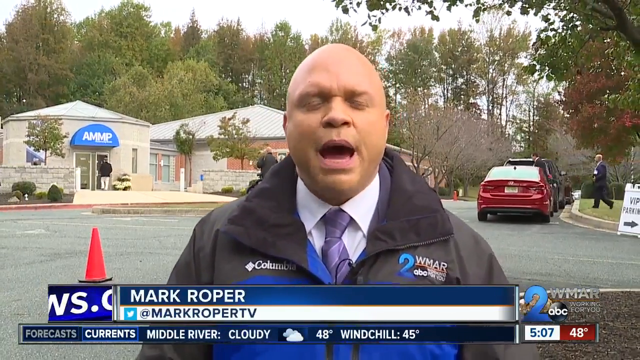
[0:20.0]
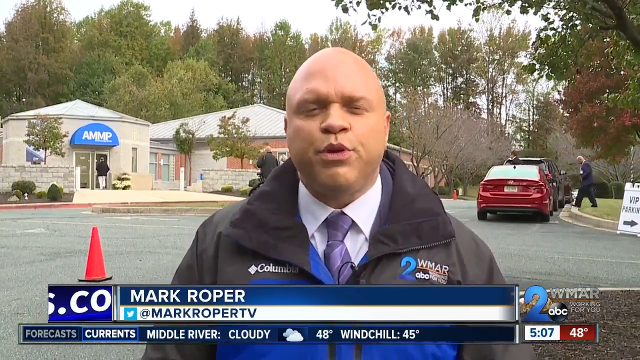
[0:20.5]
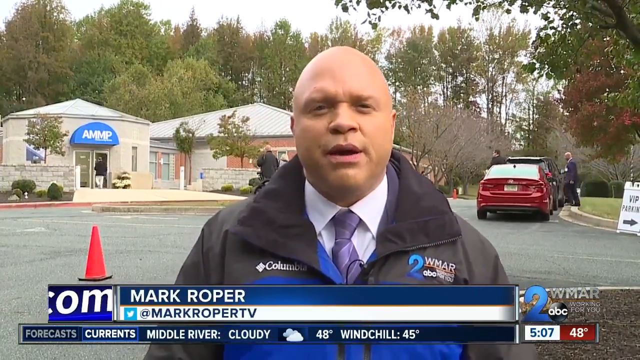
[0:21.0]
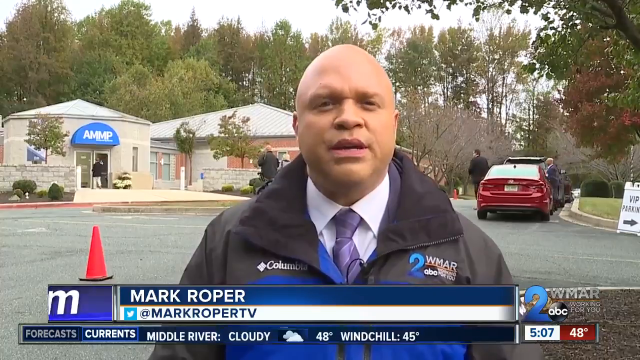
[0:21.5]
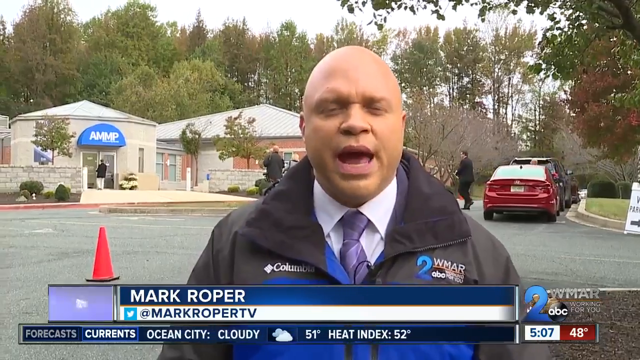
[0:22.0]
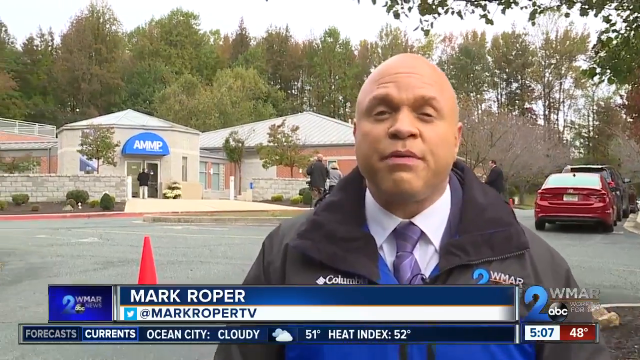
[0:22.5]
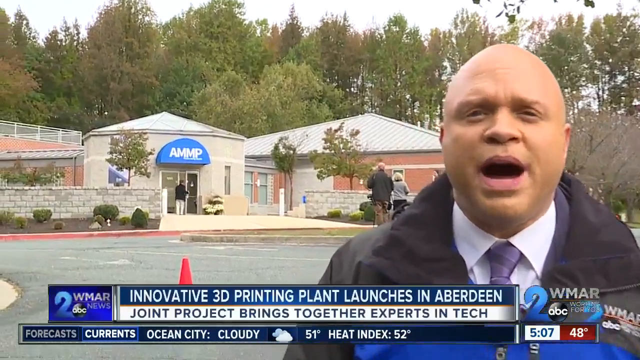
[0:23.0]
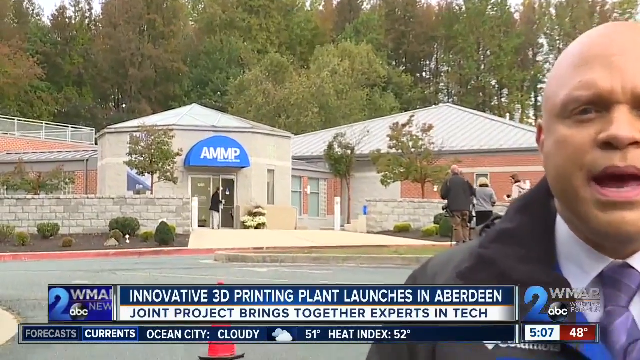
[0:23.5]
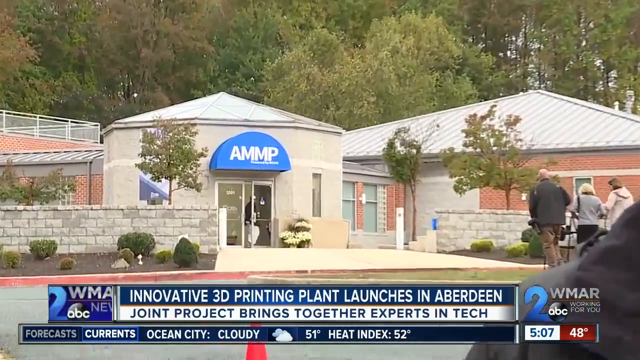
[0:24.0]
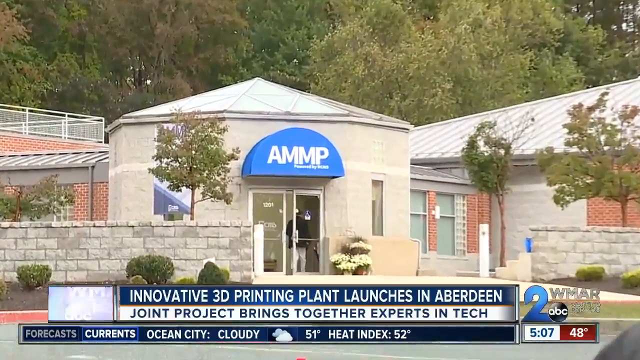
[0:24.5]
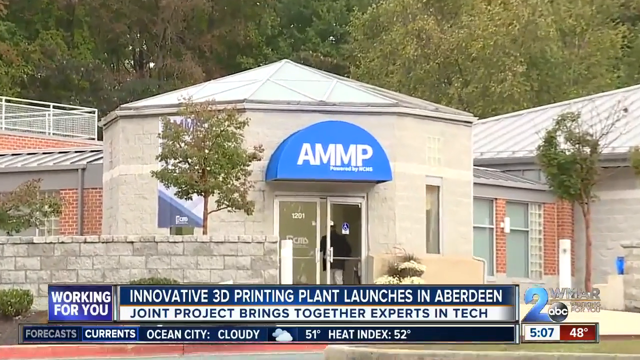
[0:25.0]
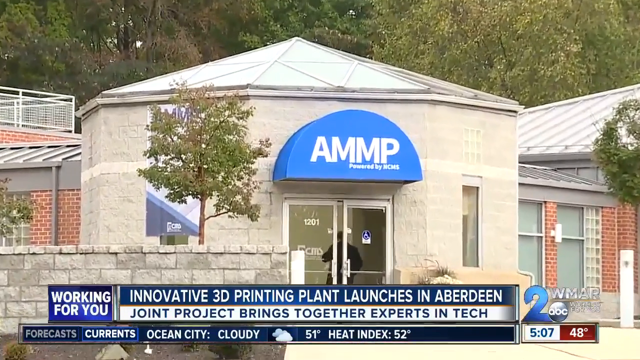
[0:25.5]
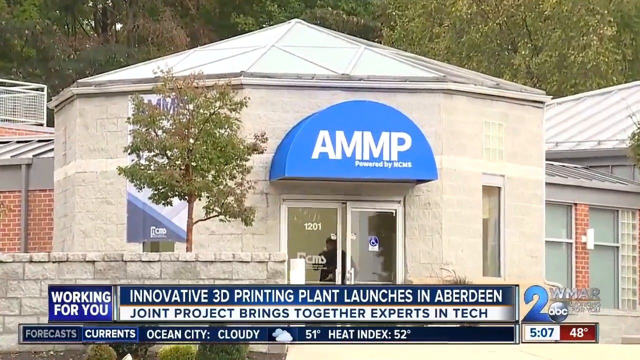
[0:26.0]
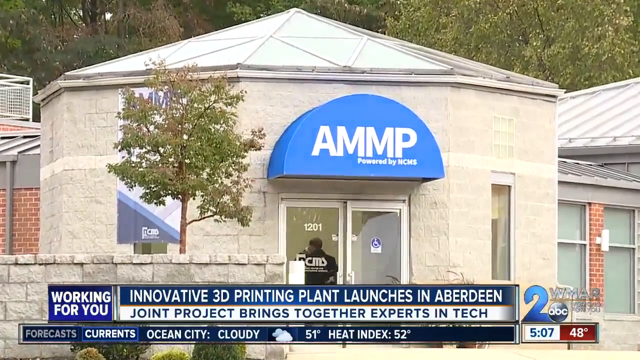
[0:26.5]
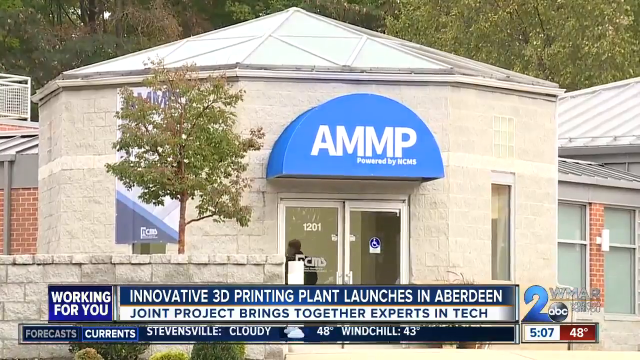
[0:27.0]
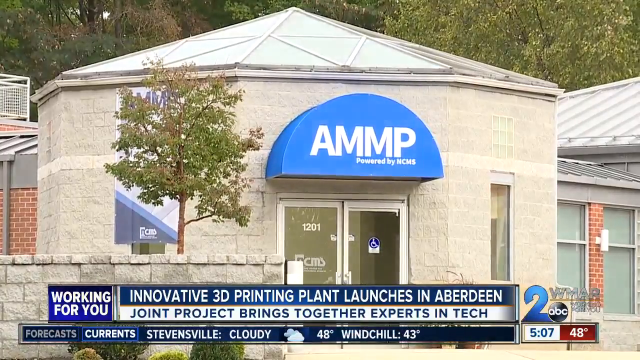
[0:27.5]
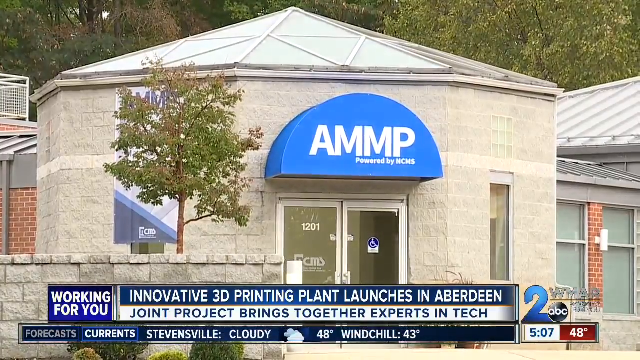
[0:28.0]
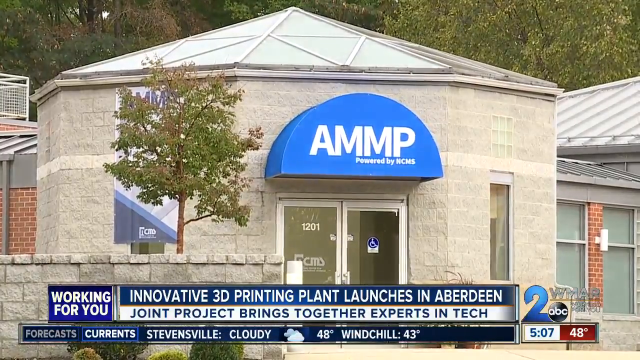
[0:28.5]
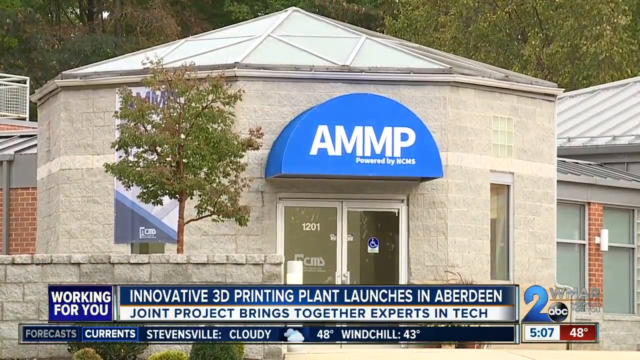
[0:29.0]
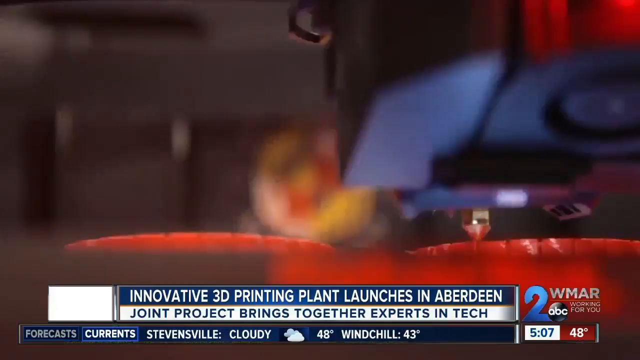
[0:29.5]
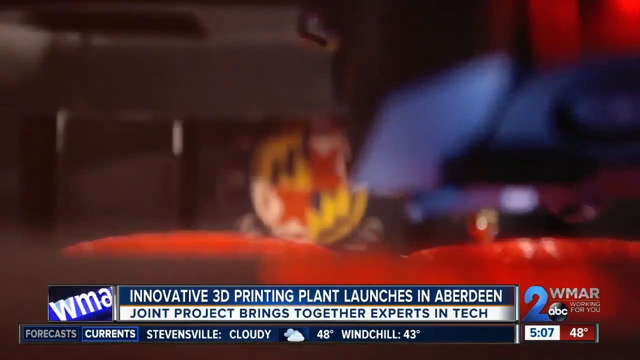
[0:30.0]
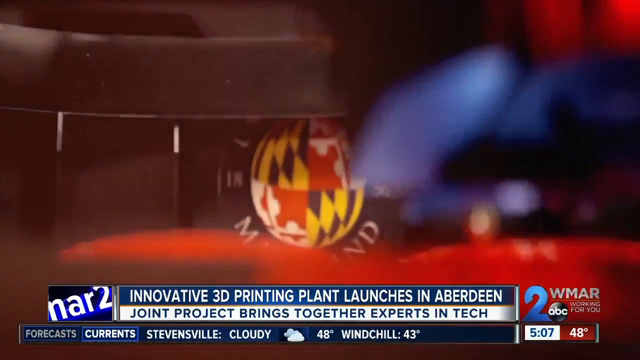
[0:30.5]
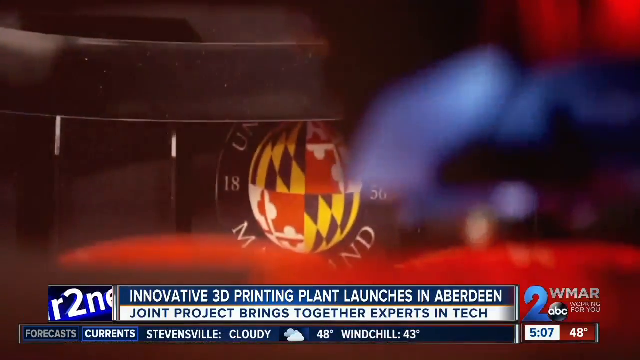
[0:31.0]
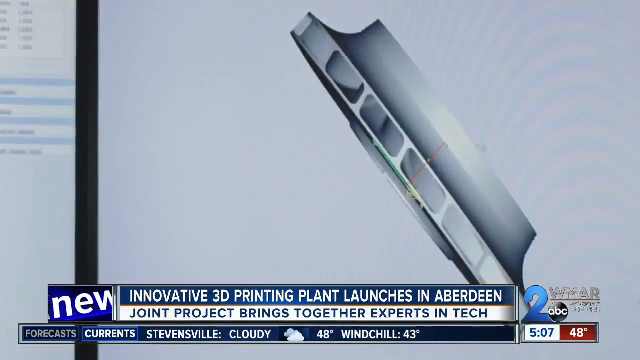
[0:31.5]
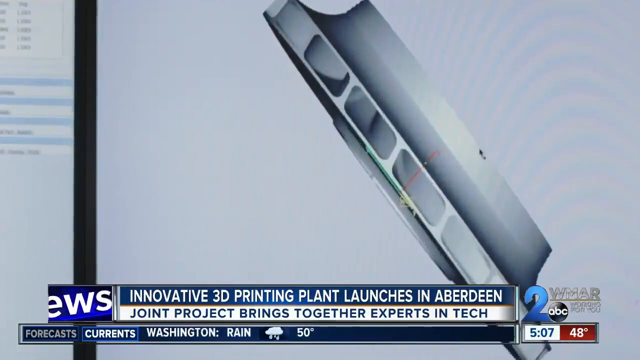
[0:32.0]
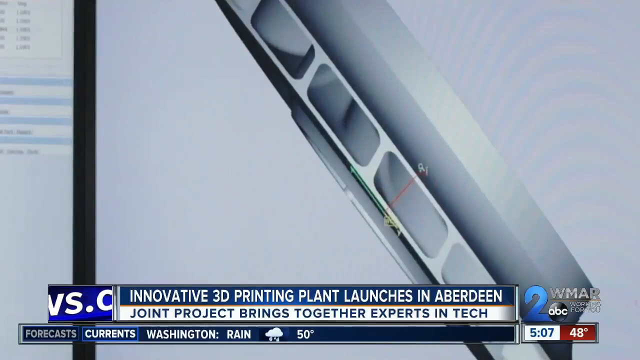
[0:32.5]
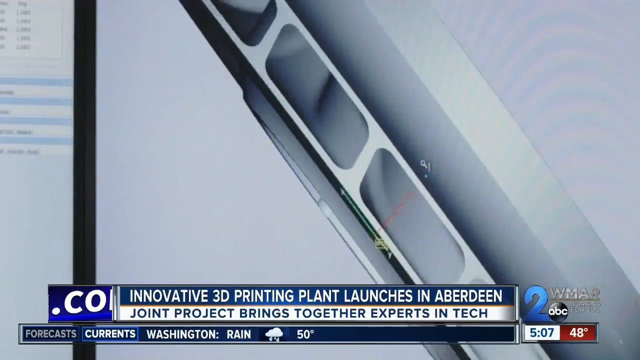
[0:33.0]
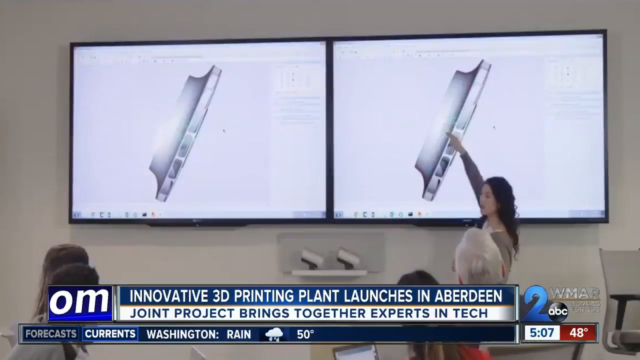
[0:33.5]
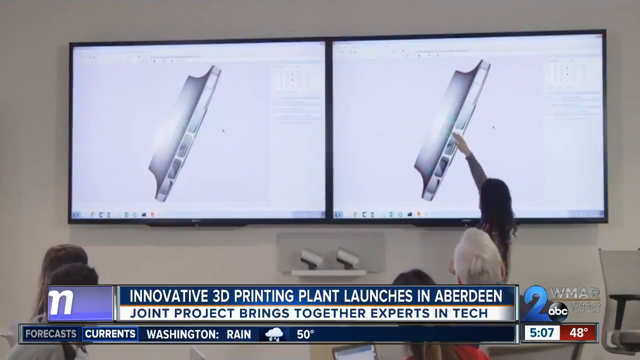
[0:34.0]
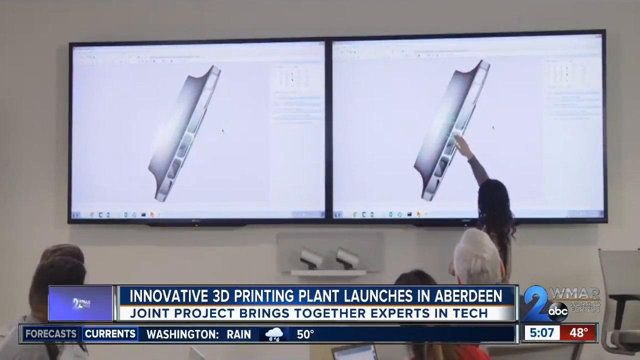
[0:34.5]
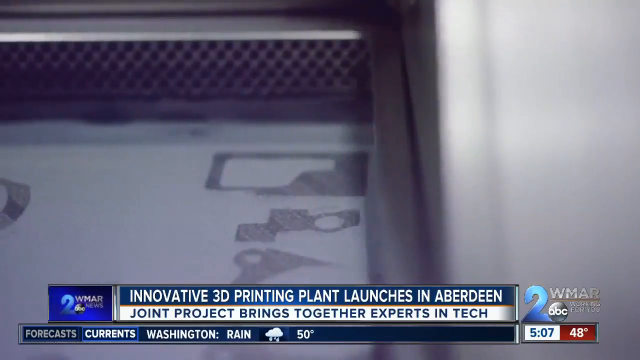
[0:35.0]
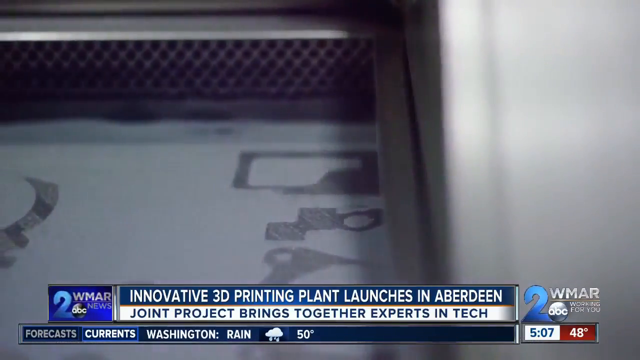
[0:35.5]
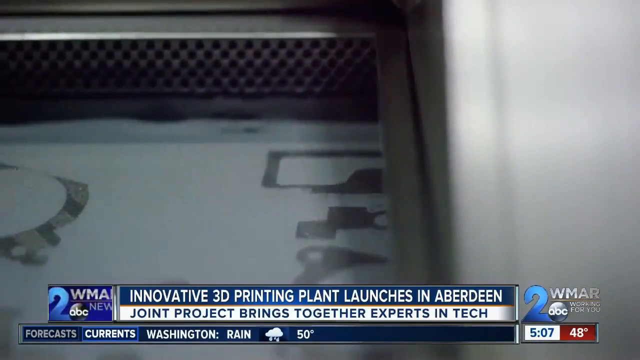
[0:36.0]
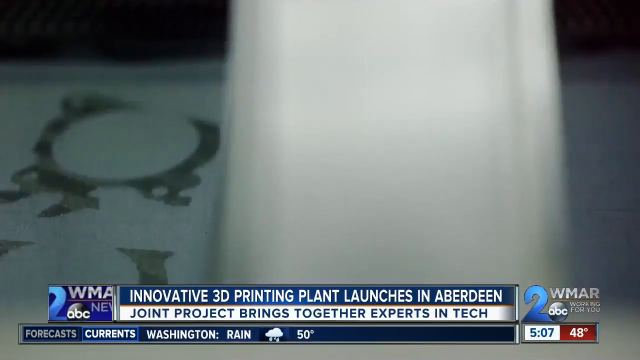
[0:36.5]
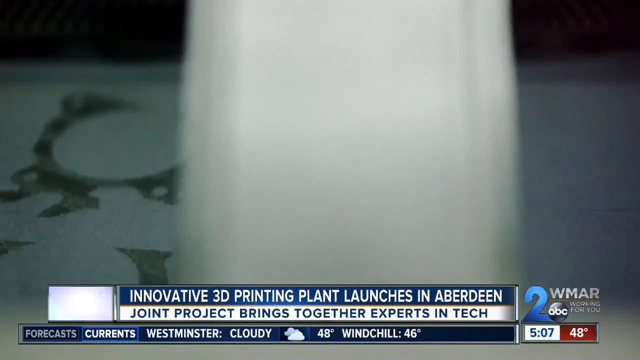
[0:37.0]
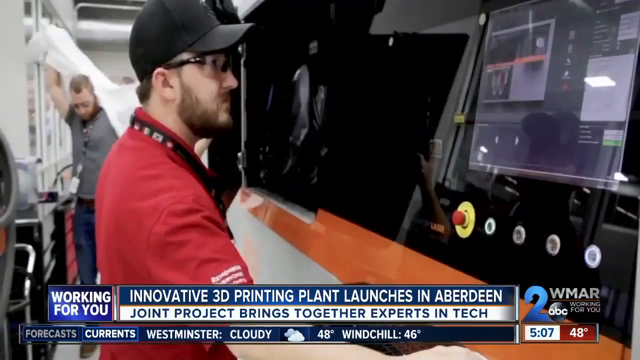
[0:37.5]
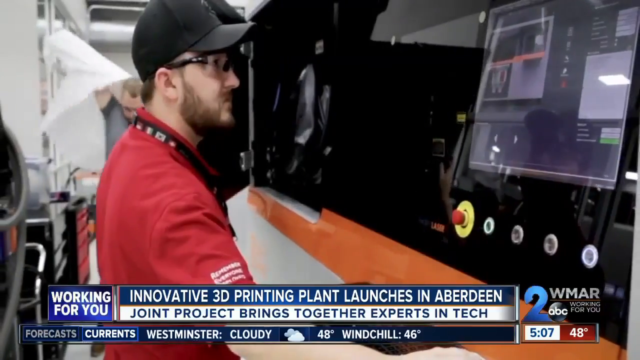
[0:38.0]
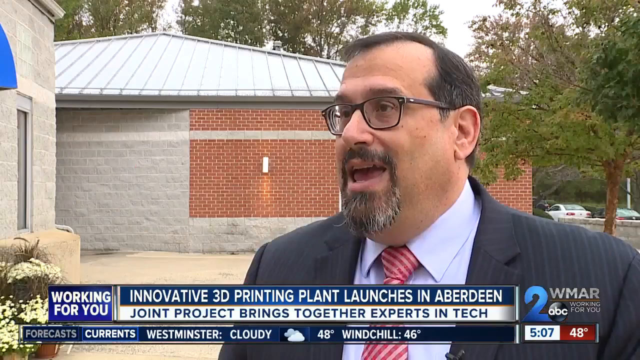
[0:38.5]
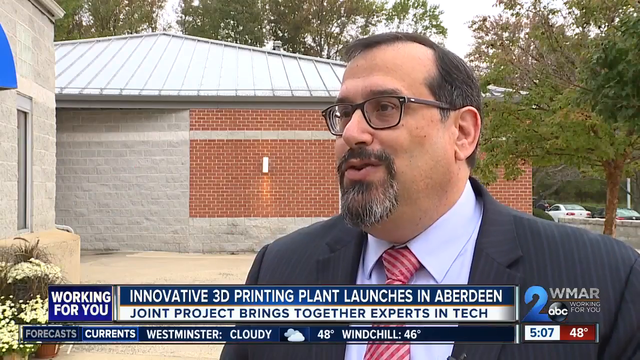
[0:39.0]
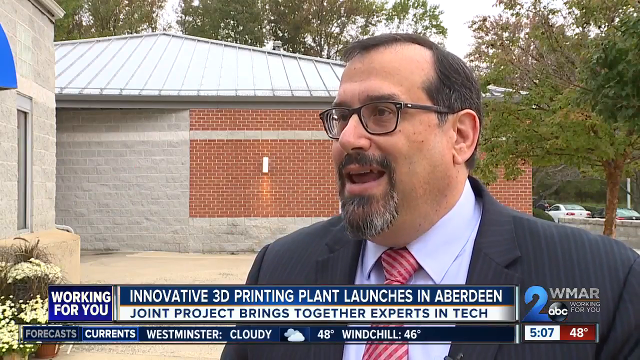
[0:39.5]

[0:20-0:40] Reporter Mark Roper is in a parking lot with a business behind him. The ticker at the bottom reads "Innovative 3D Printing Plant launches in Aberdeen. Joint project brings together experts and tech." The time and temperature are also visible. The video pans close to the business behind Mark, whose blue awning has the white letters A-M-M-P, panning all the way up to the awning. It then transitions to computer monitors with computer-generated 3D images on the screen. The view pans back to reveal a room with two large monitors on the wall and a woman pointing to them and describing them. Next comes an assembly line where men look at computer monitors. The report is by Mark Roper with WMAR Channel 2 ABC News.